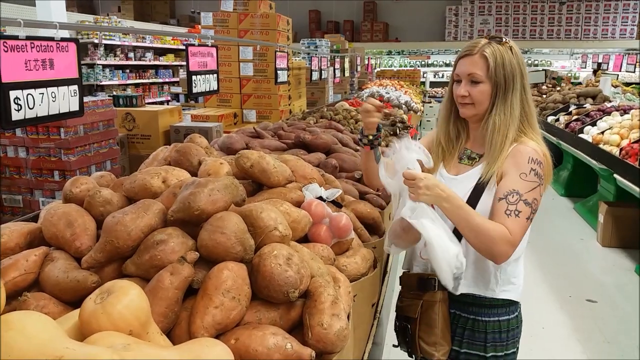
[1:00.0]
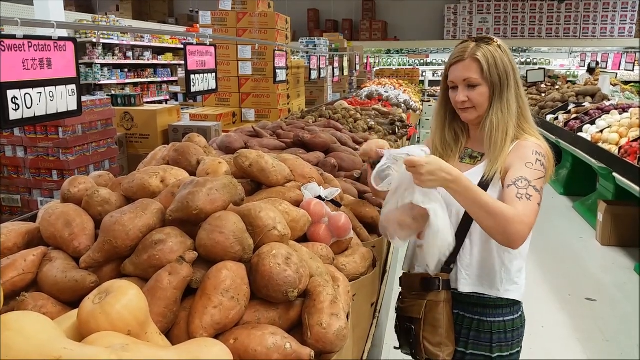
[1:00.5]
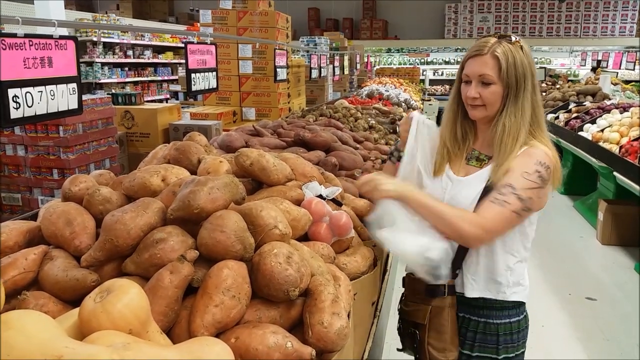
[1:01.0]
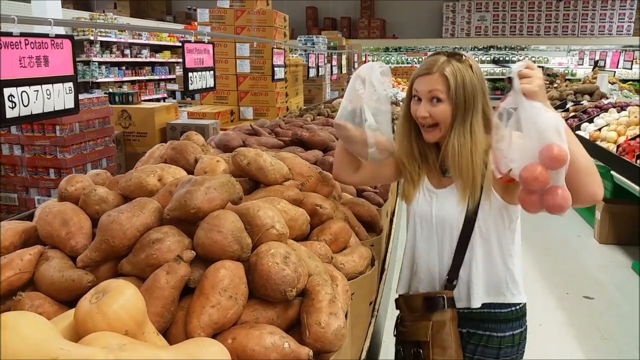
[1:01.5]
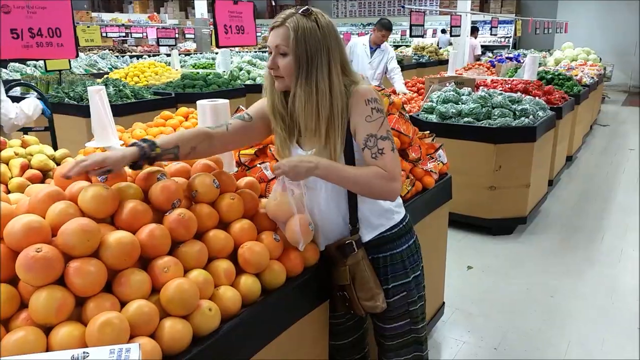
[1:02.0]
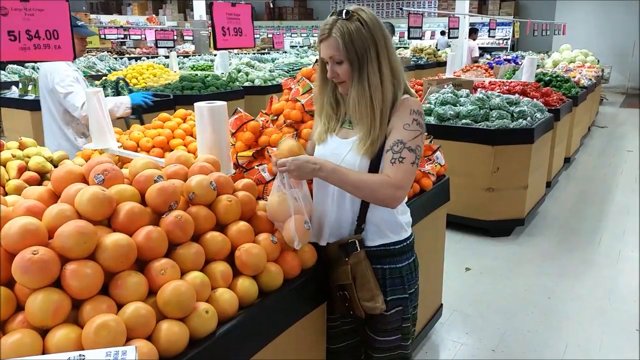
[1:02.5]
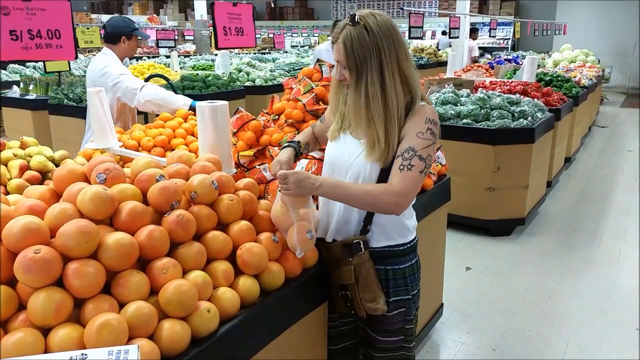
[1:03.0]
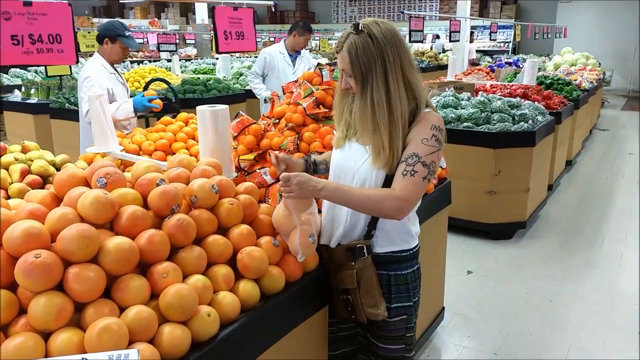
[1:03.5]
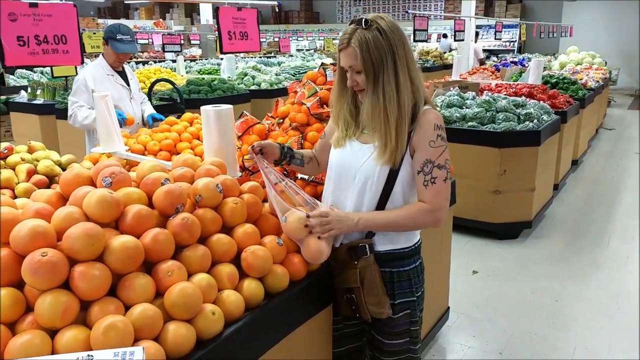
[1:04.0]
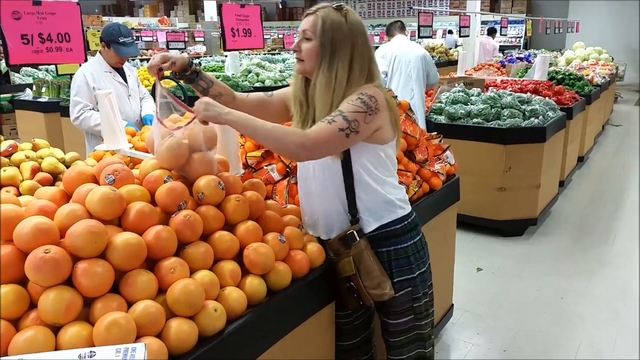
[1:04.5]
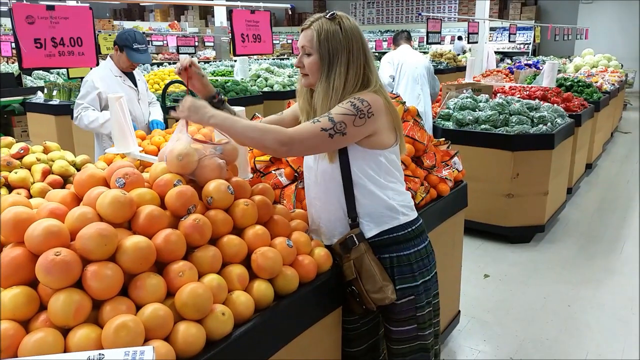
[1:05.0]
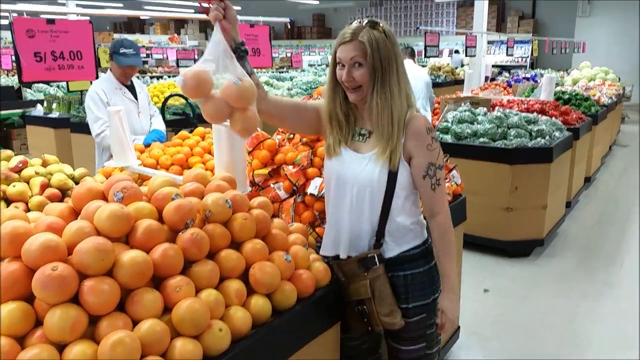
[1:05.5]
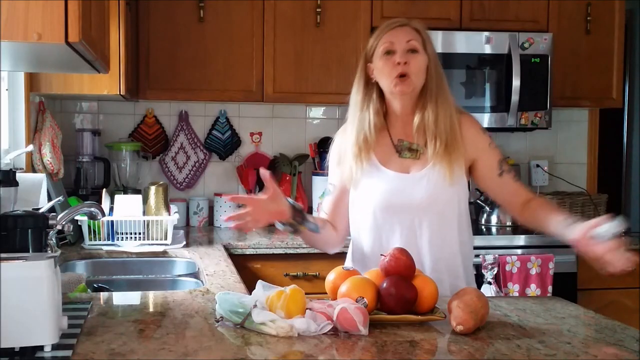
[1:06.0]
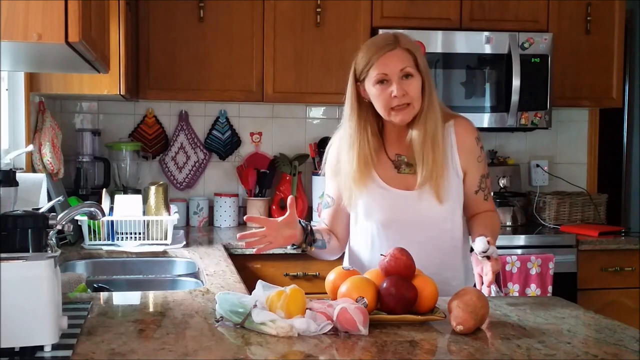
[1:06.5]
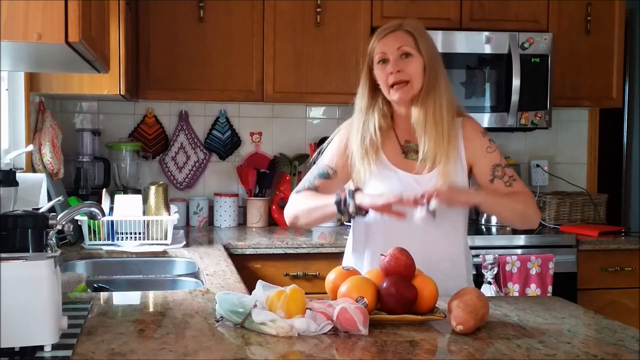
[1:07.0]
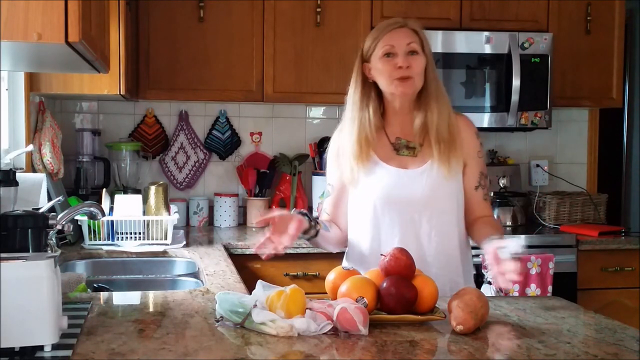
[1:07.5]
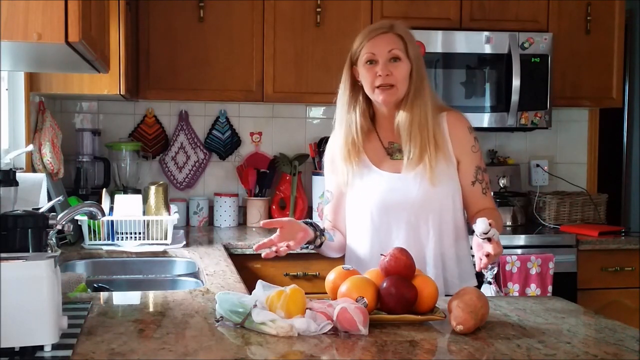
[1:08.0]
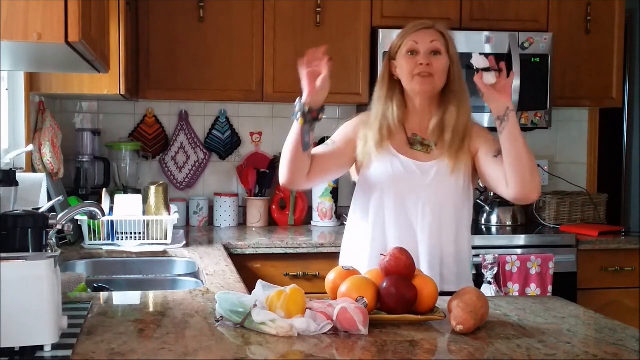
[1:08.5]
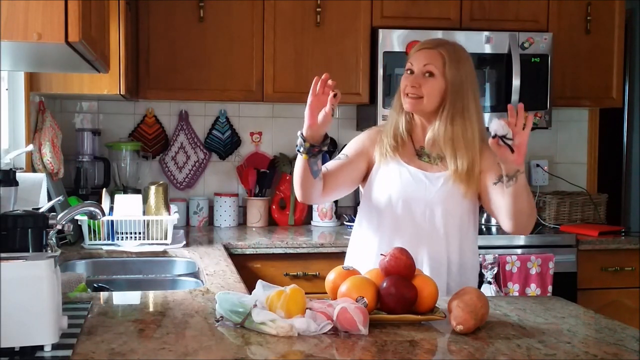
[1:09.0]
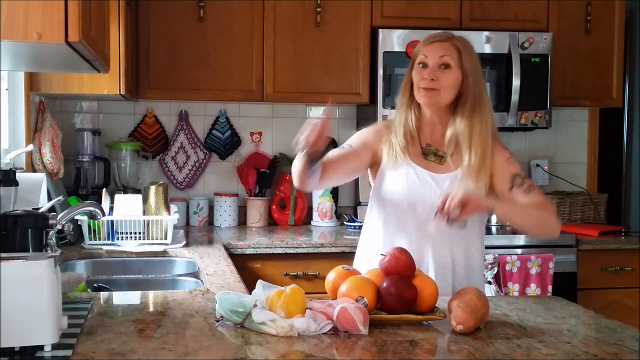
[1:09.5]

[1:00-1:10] The woman continues shopping for potatoes. She is then seen reaching for bananas, showing off her reusable bags; it is unclear whether they are plastic.